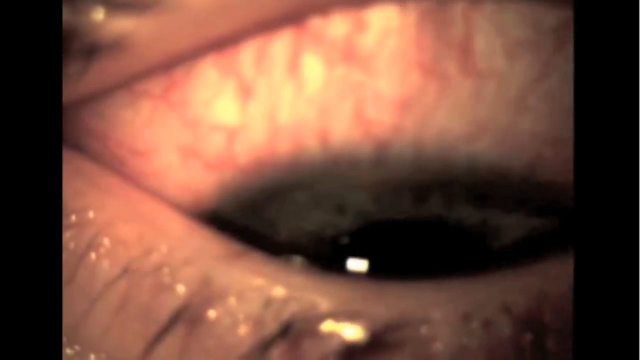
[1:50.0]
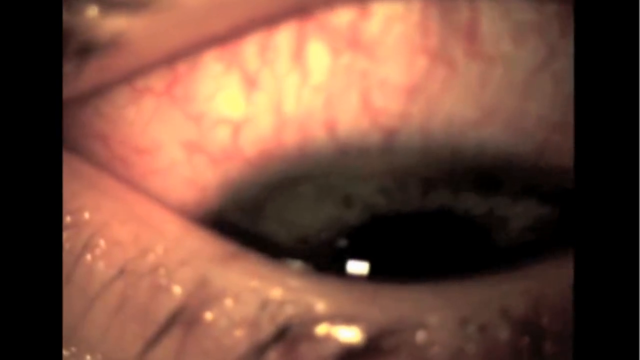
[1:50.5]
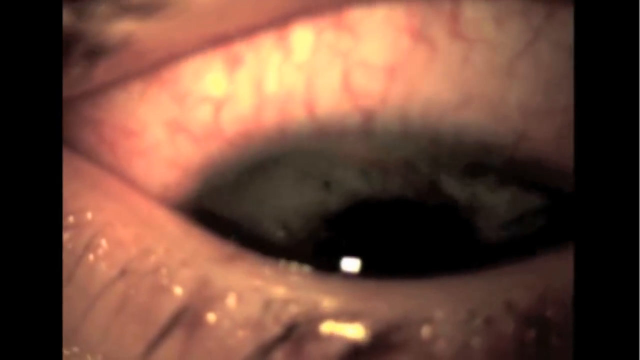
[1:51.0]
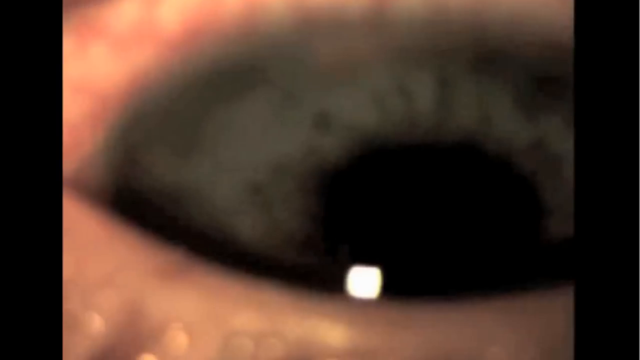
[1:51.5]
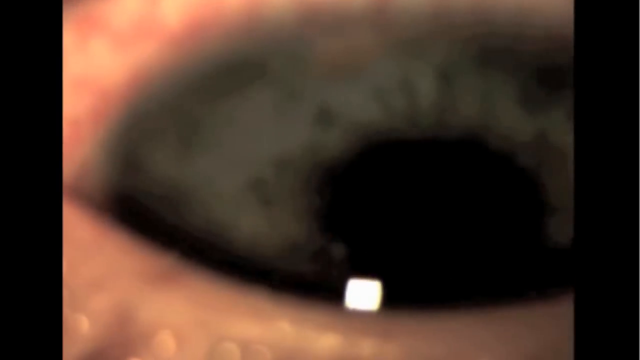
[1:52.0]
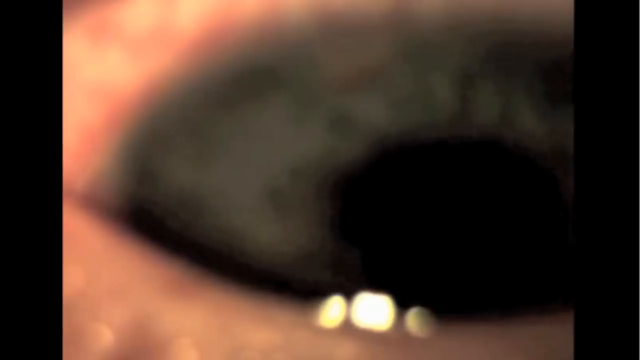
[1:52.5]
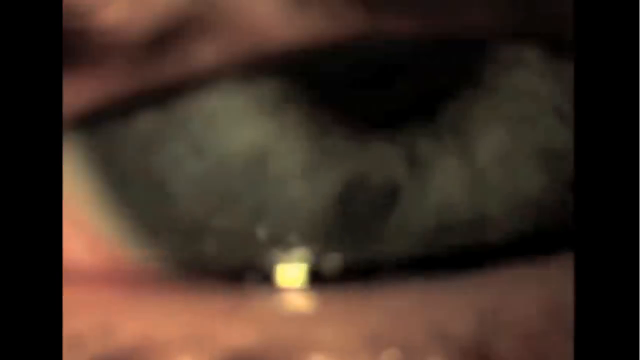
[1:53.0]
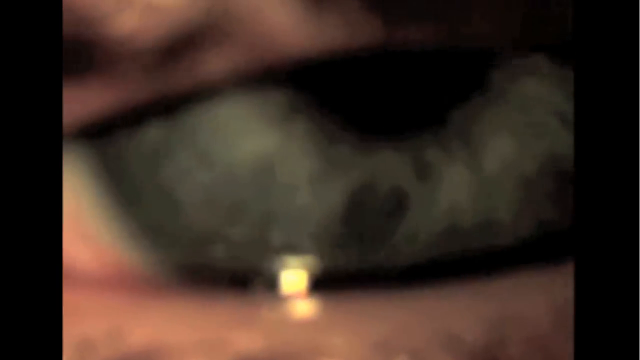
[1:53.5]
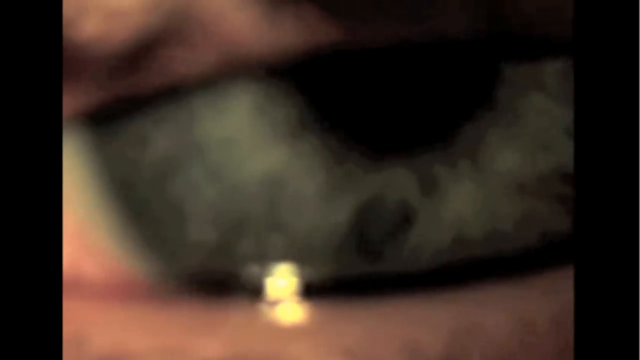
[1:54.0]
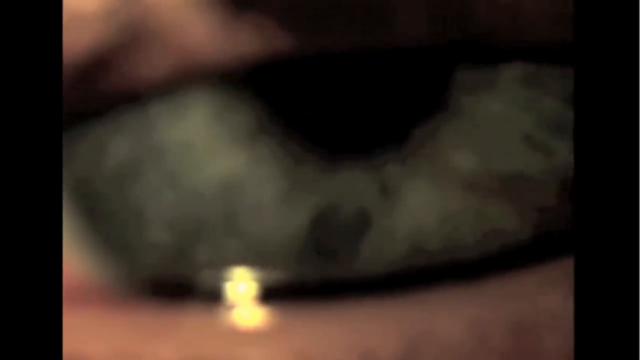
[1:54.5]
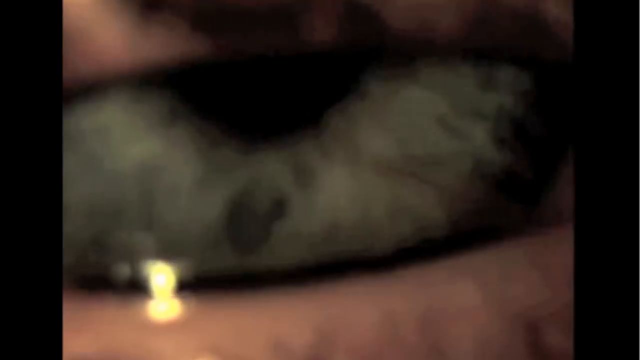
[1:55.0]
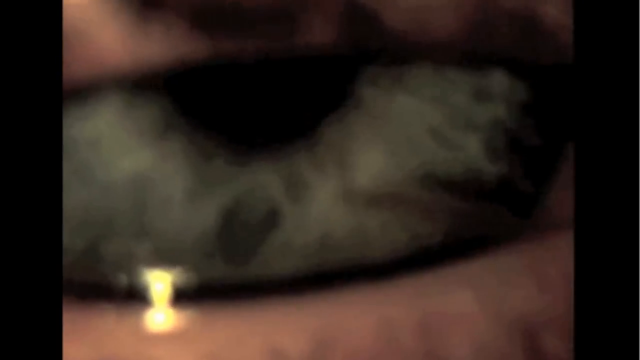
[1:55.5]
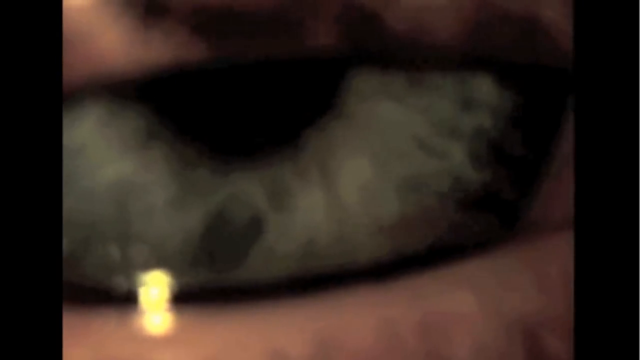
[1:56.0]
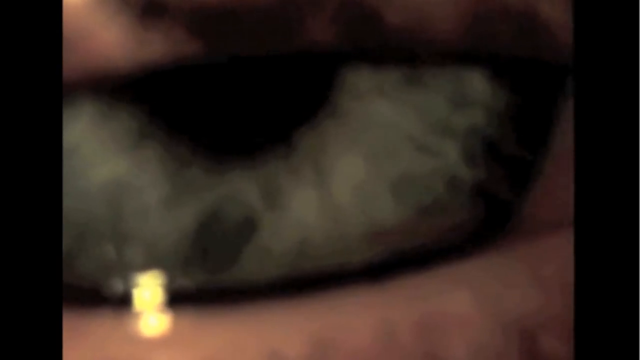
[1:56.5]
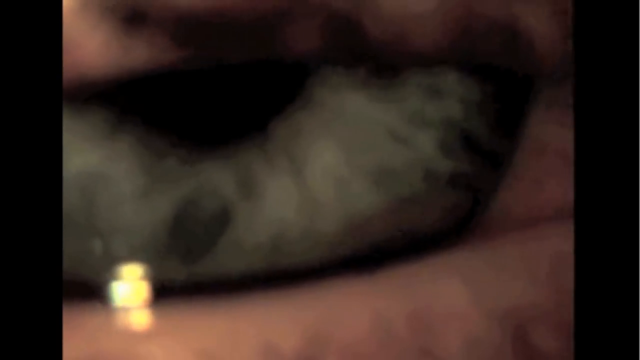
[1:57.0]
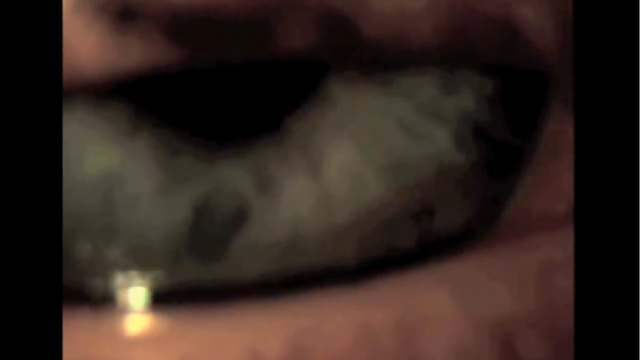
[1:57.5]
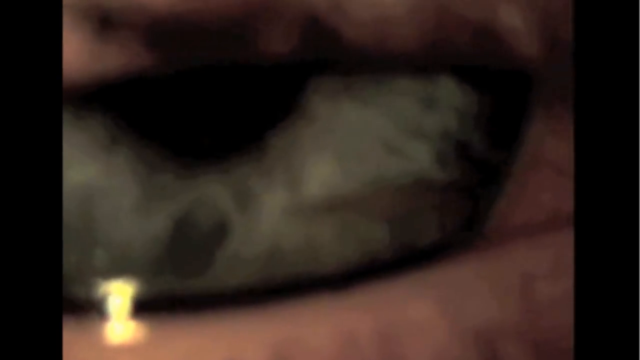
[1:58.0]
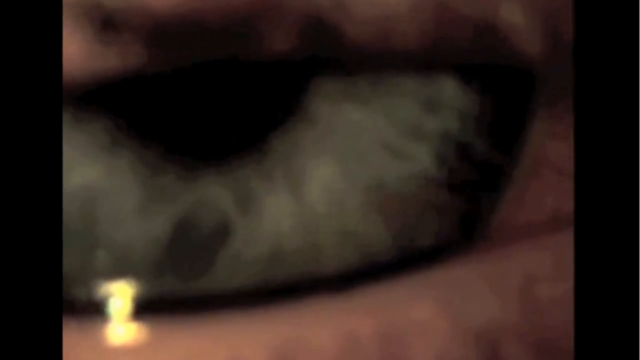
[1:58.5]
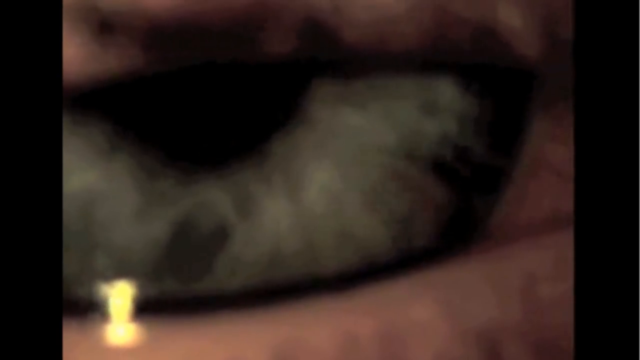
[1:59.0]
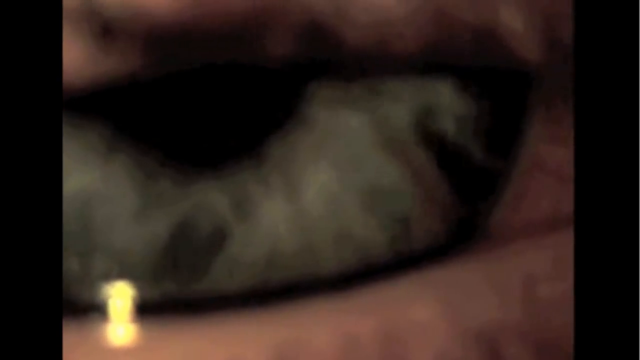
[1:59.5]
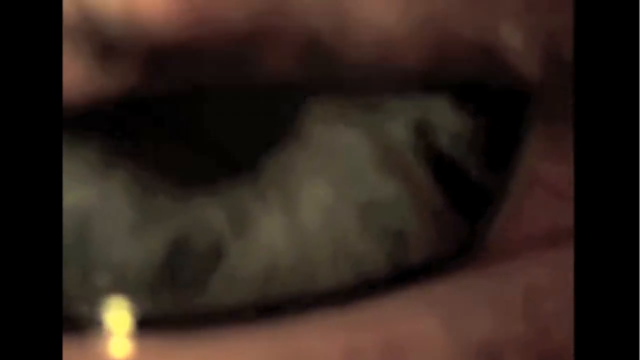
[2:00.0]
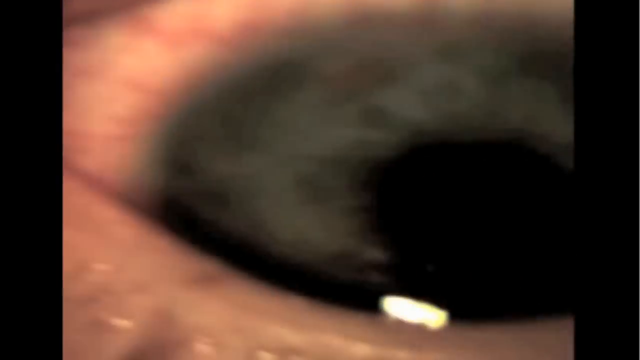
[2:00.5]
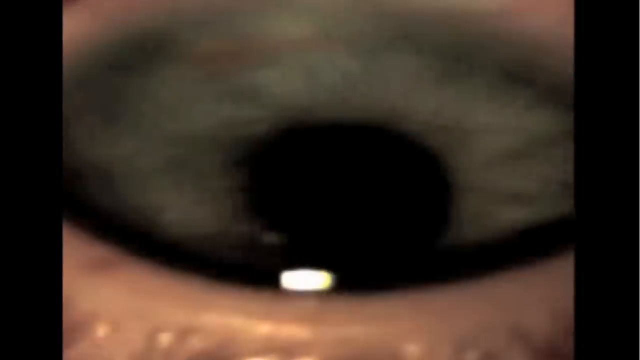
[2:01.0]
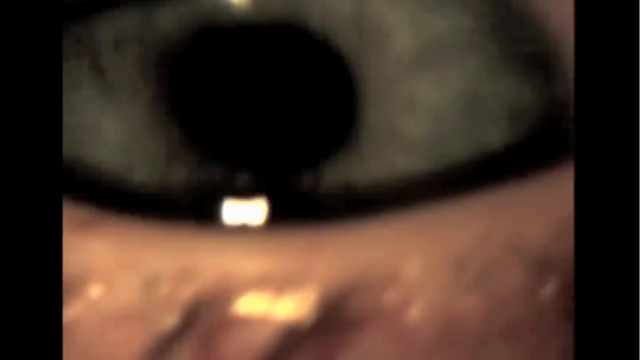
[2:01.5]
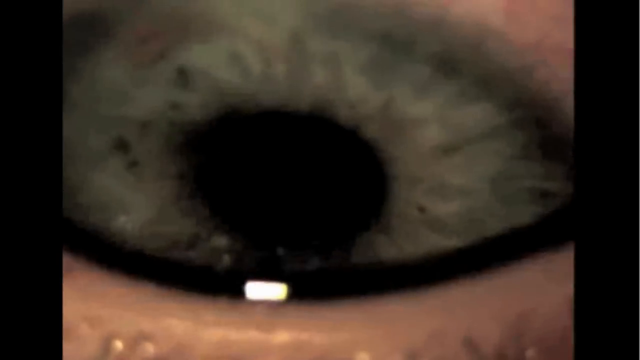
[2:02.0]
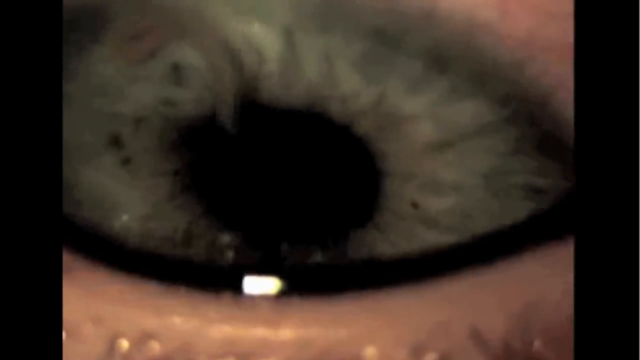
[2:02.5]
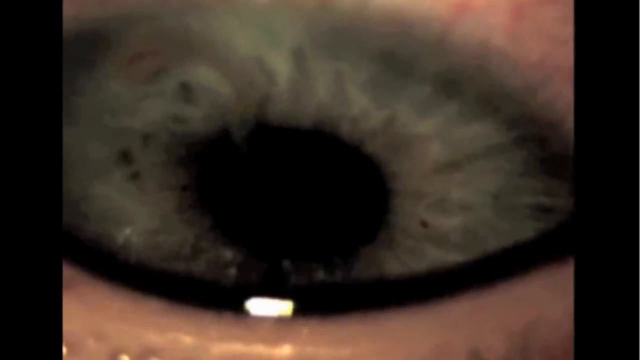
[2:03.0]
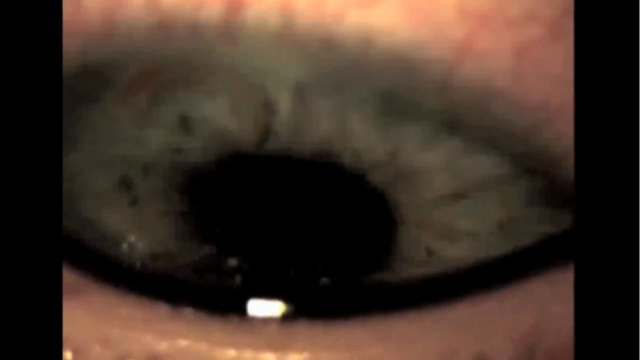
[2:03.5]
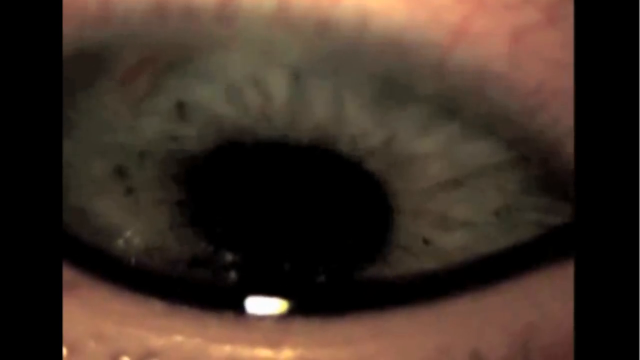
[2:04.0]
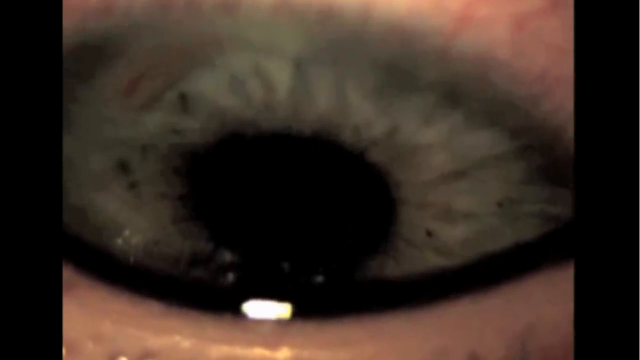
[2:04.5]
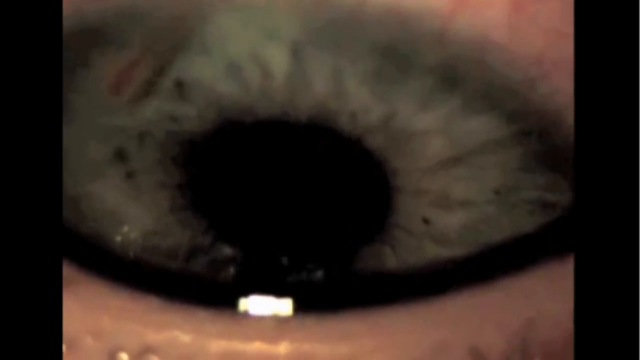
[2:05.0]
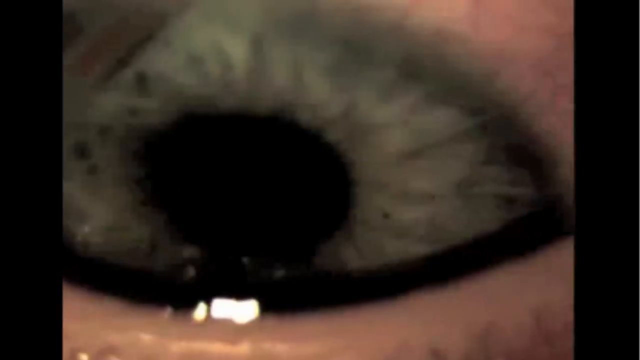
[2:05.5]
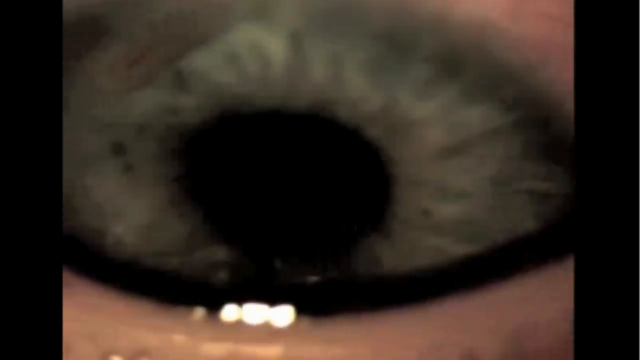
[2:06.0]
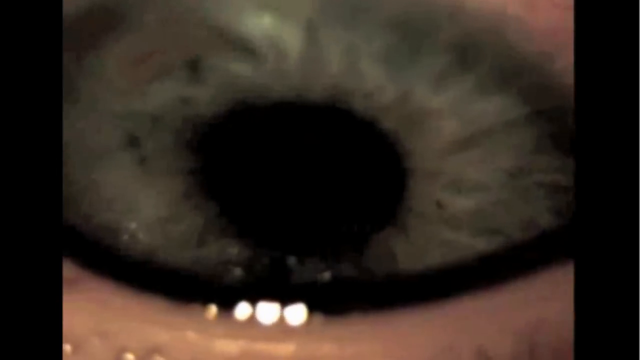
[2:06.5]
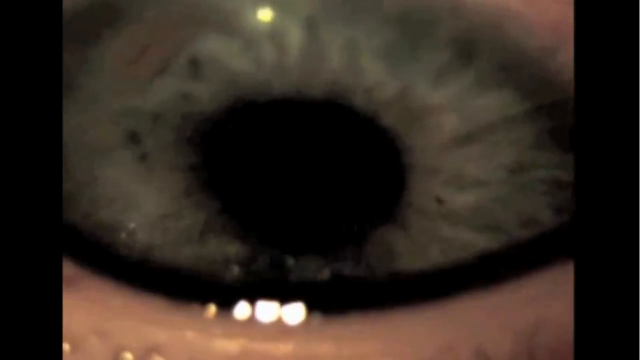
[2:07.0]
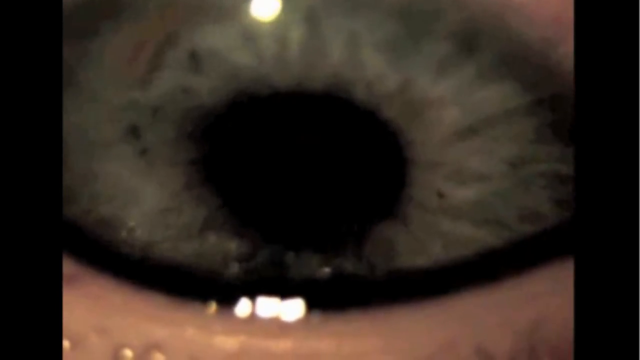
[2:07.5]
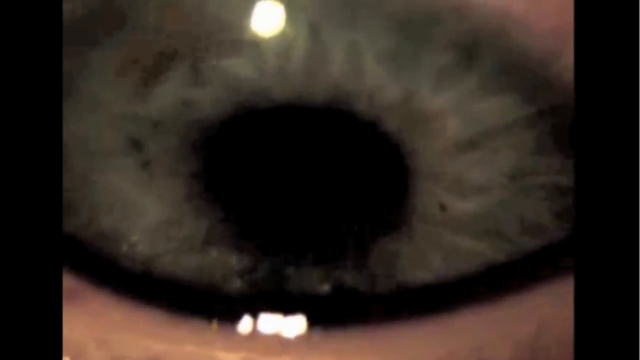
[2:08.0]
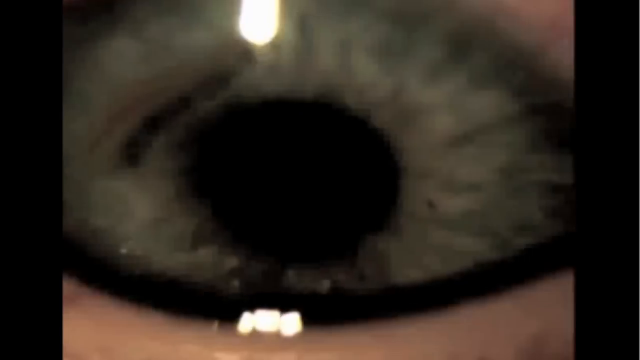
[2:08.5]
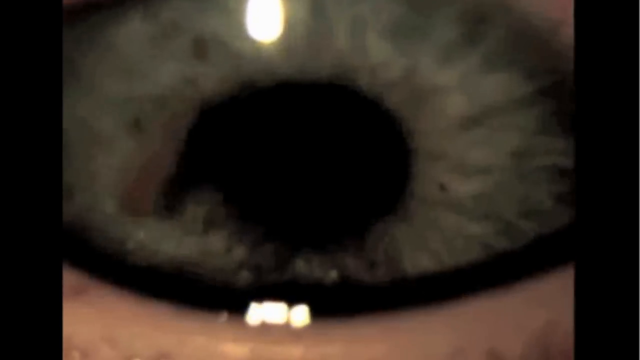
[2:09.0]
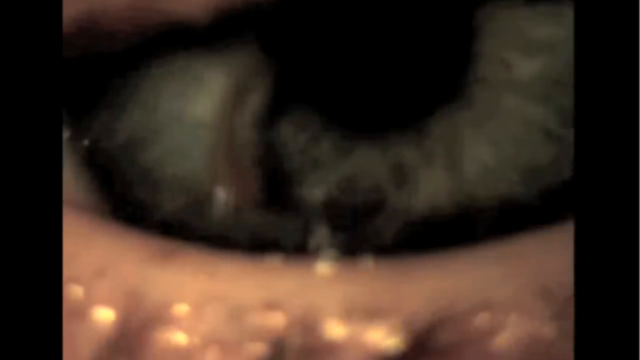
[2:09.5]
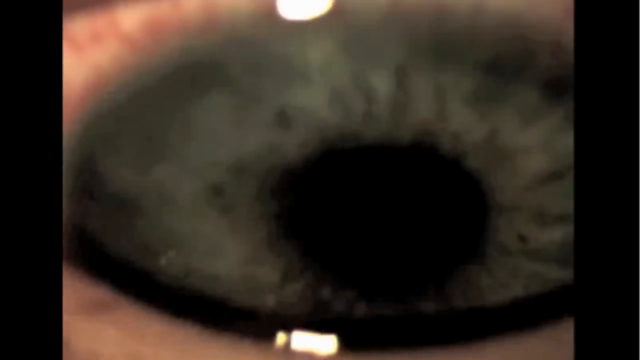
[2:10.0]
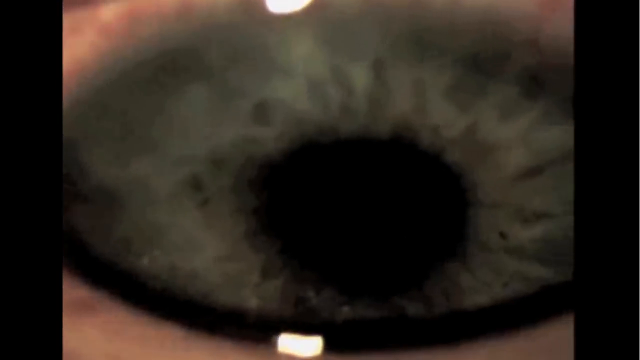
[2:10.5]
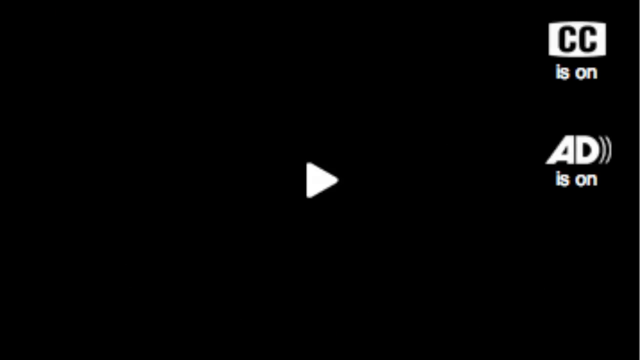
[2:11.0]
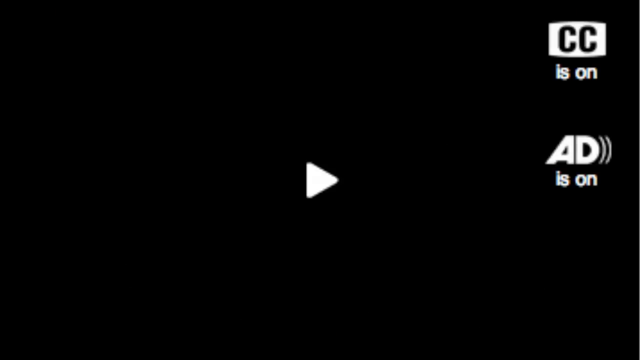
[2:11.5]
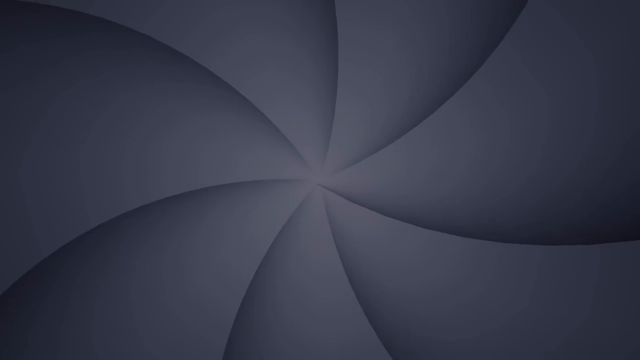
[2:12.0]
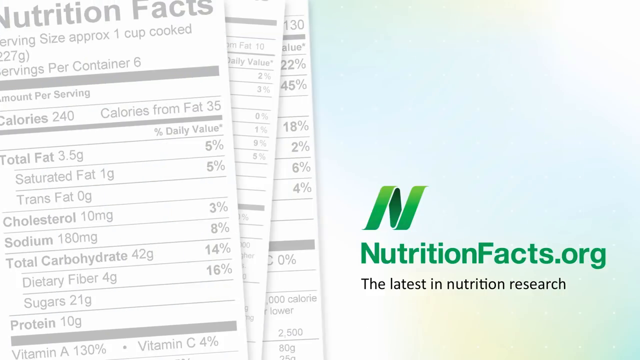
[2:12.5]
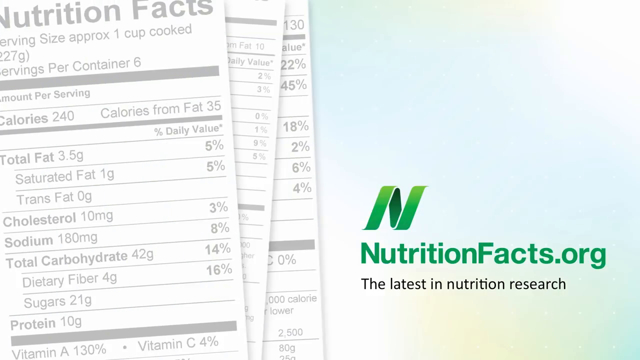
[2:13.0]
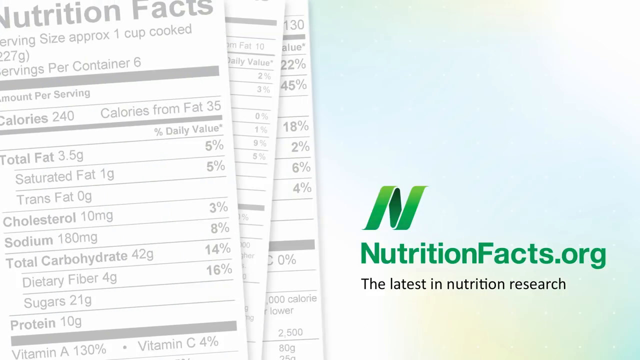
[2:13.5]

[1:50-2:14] A video recording shows a human eye whose eyelids are being held open by an examiner. A small parasite is swimming around in the anterior chamber of the patient's eye, visible in front of her iris and pupil as she blinks. It looks to be a very uncomfortable situation. Light reflects off the eyeball, and veins are visible in the white part of her eye, along with her pupil. An end screen then says "Nutrition Facts" in green lettering, with several nutrition labels shown on the left-hand side of the screen.